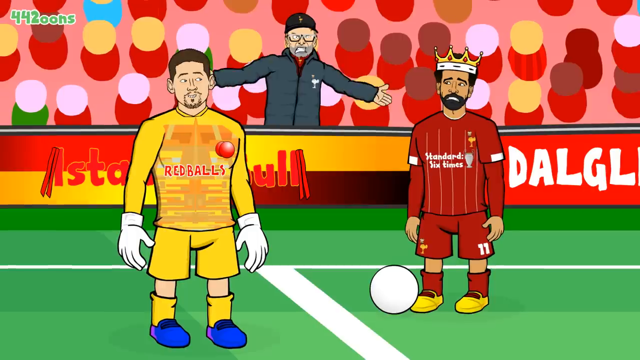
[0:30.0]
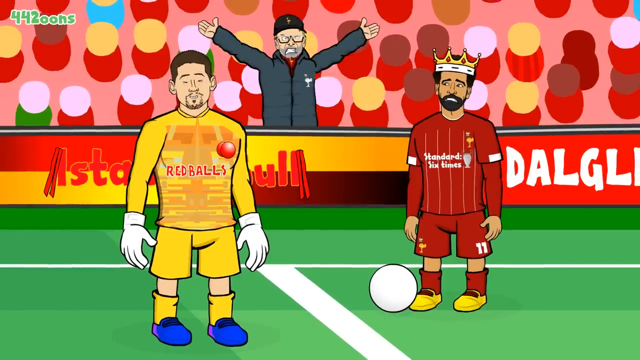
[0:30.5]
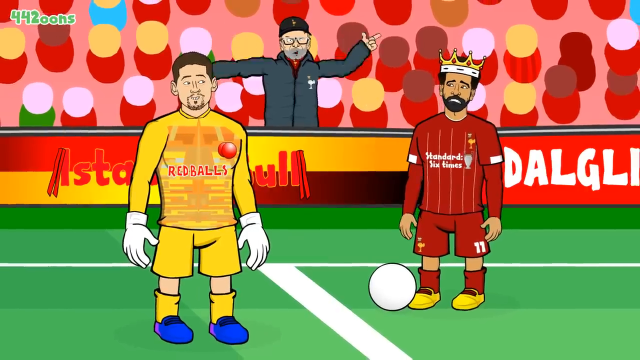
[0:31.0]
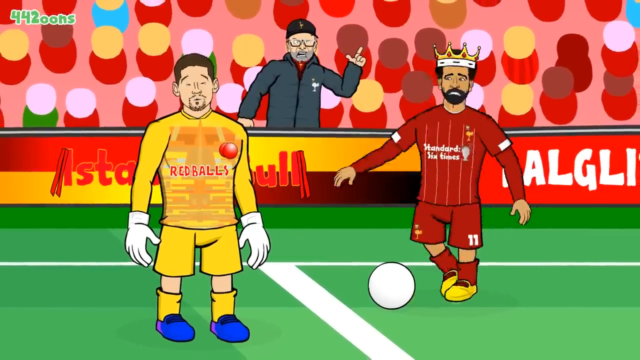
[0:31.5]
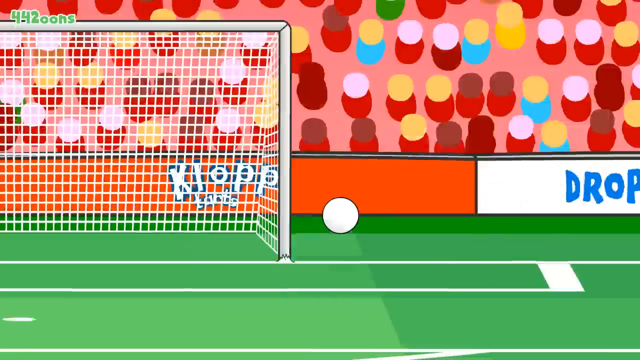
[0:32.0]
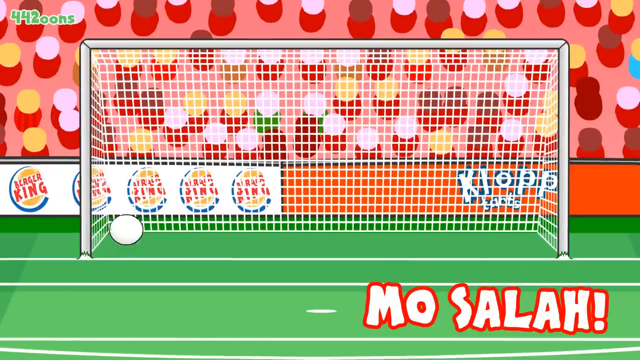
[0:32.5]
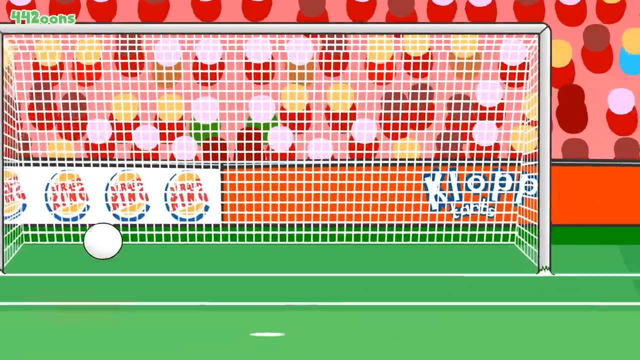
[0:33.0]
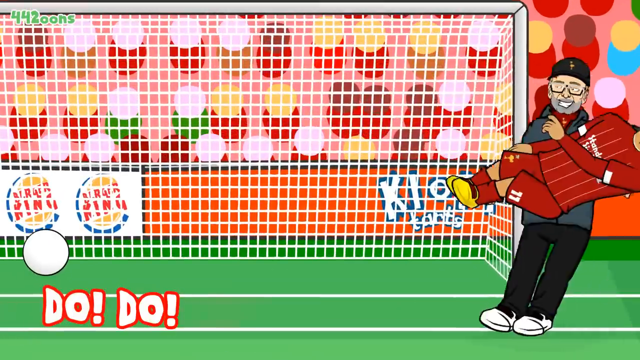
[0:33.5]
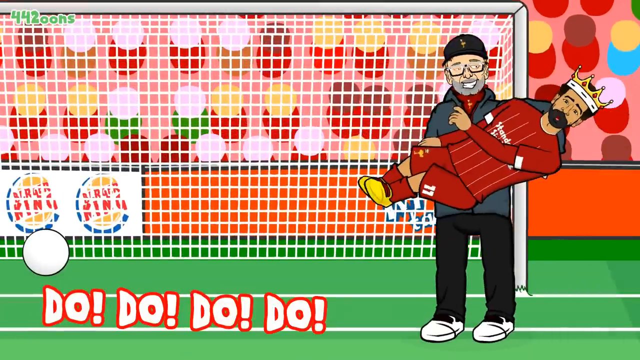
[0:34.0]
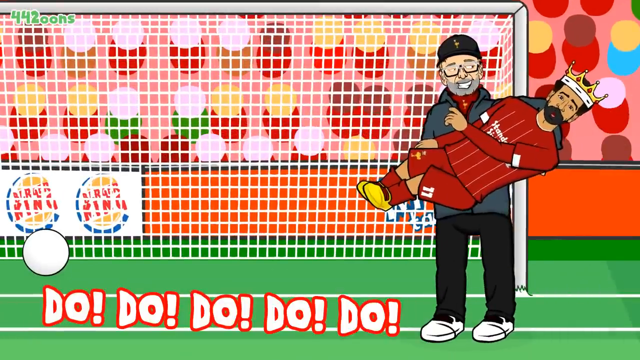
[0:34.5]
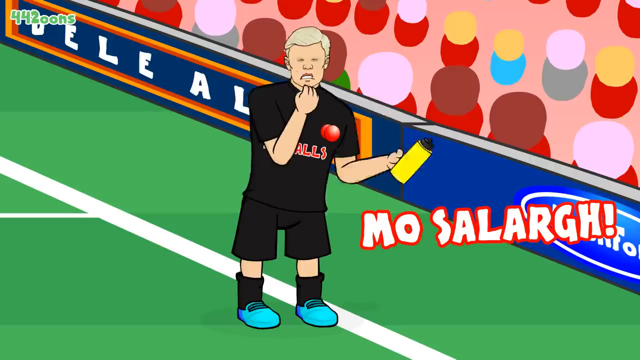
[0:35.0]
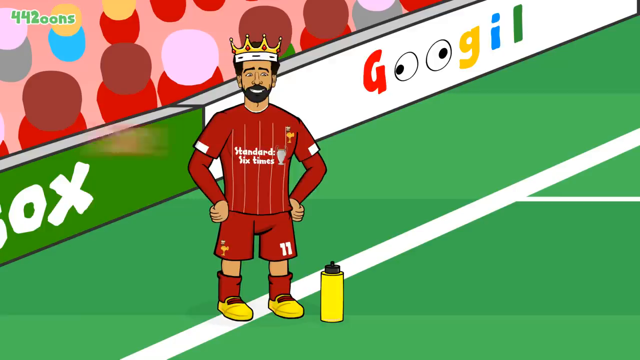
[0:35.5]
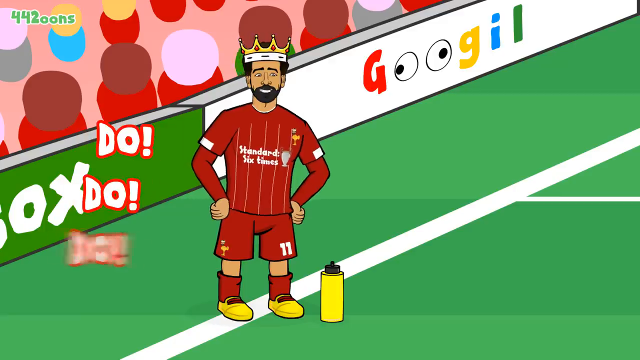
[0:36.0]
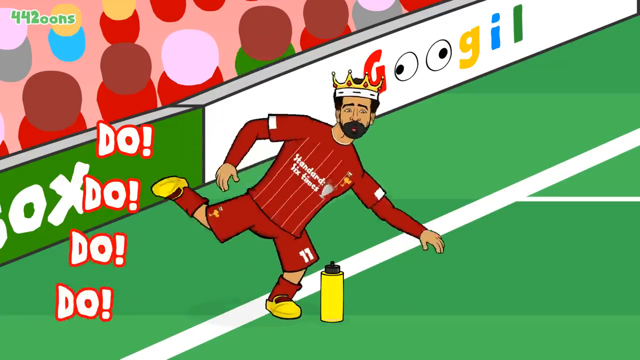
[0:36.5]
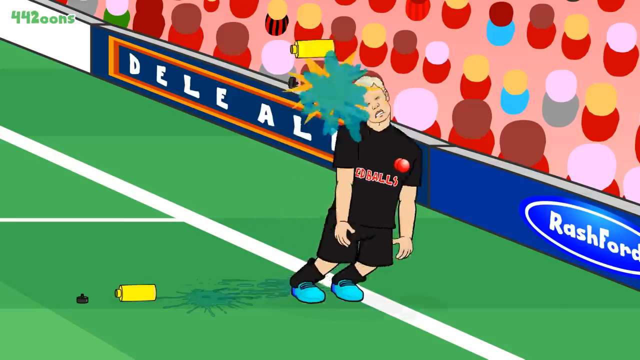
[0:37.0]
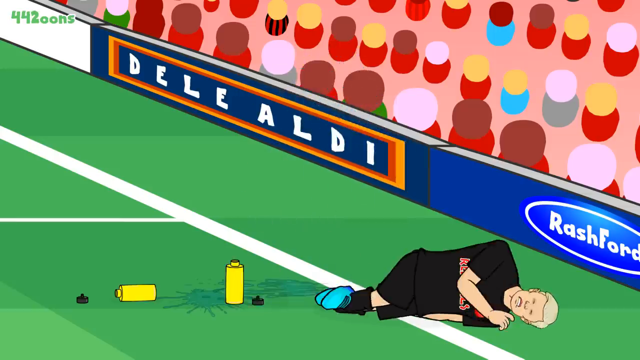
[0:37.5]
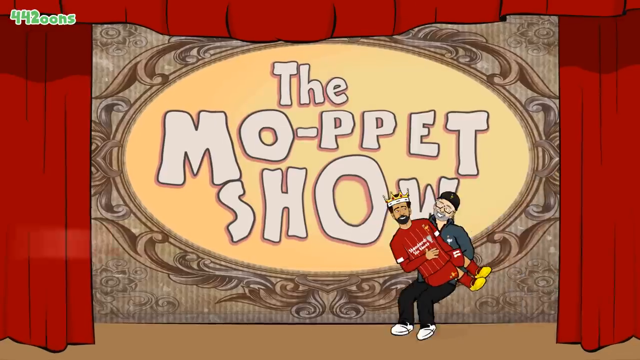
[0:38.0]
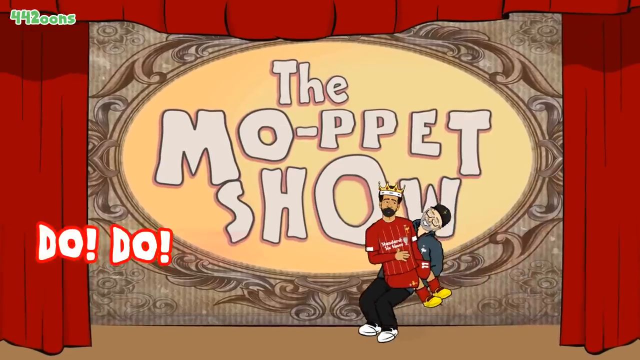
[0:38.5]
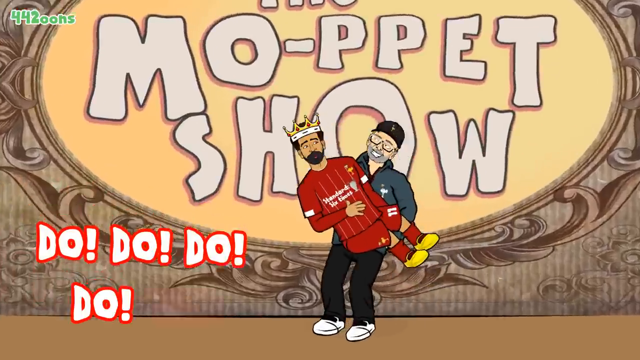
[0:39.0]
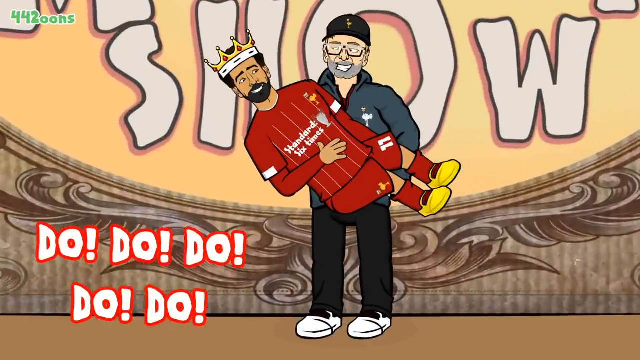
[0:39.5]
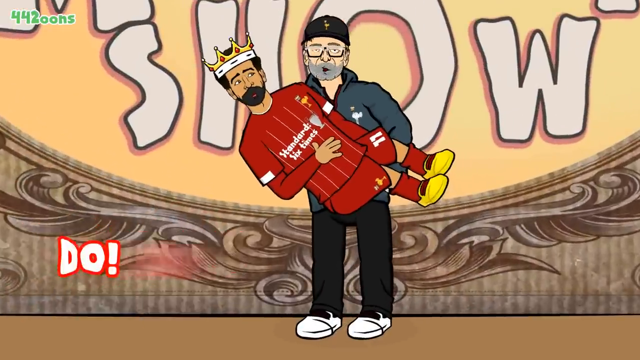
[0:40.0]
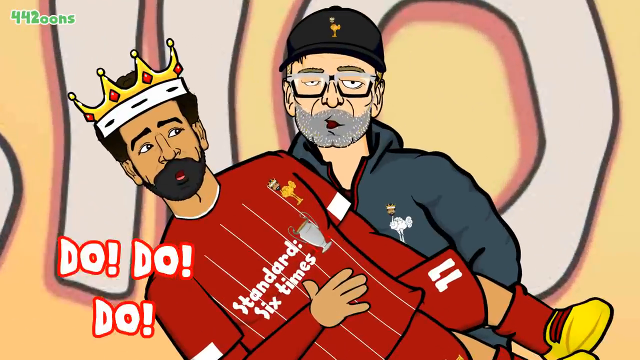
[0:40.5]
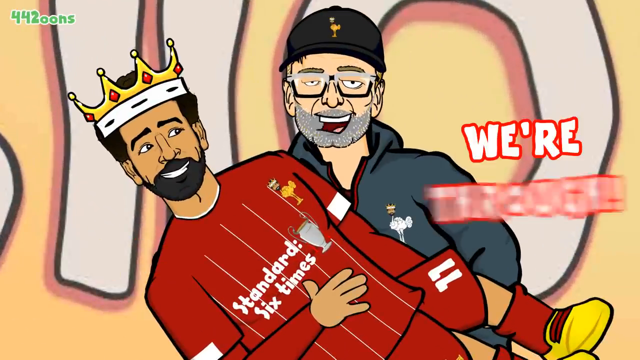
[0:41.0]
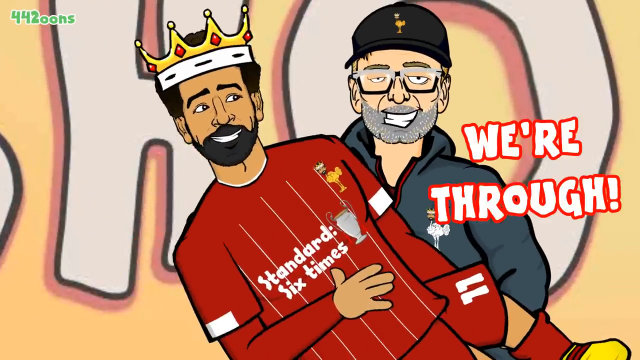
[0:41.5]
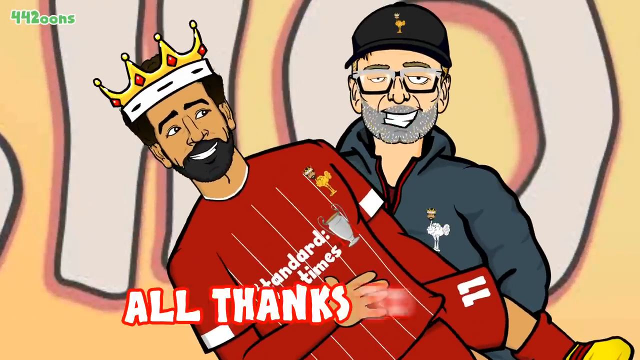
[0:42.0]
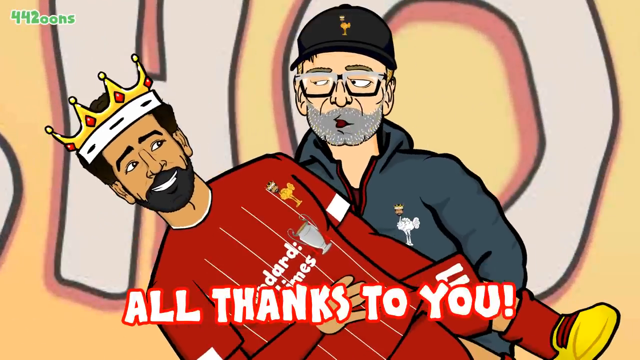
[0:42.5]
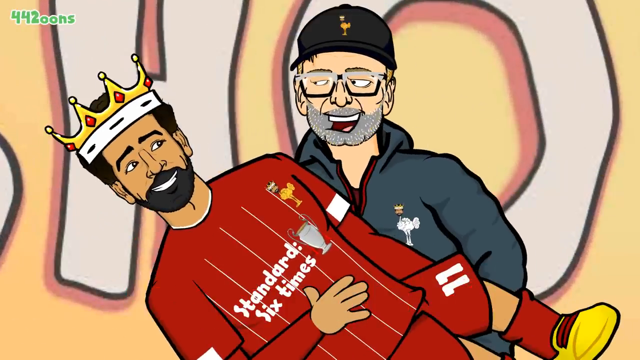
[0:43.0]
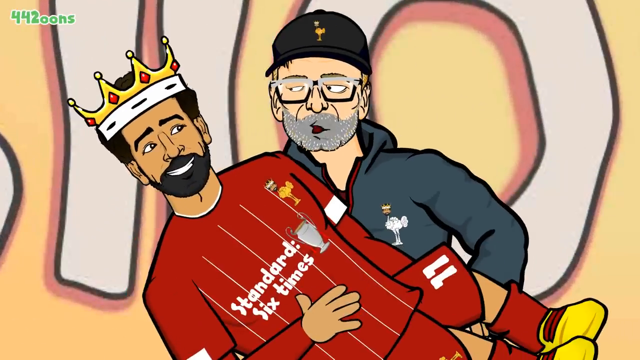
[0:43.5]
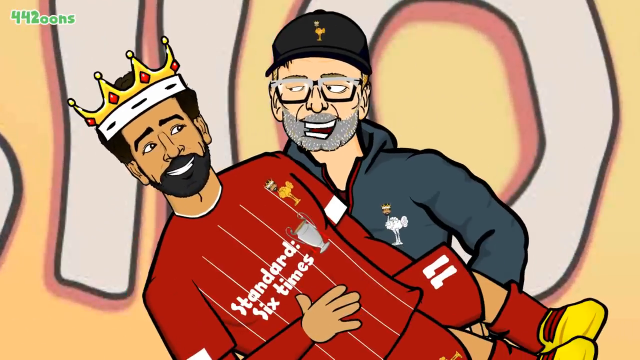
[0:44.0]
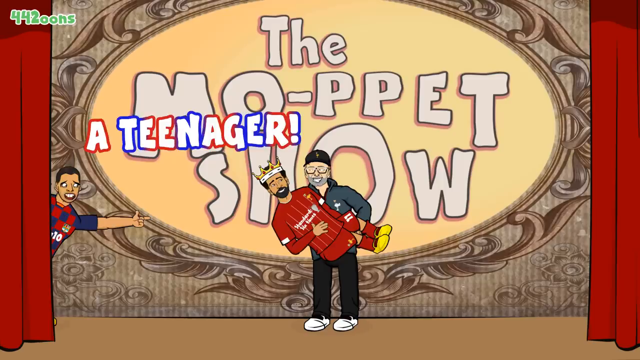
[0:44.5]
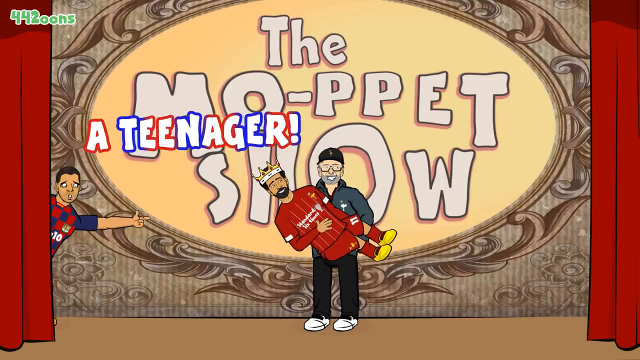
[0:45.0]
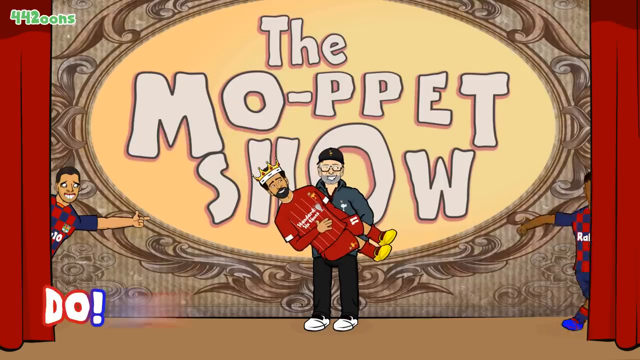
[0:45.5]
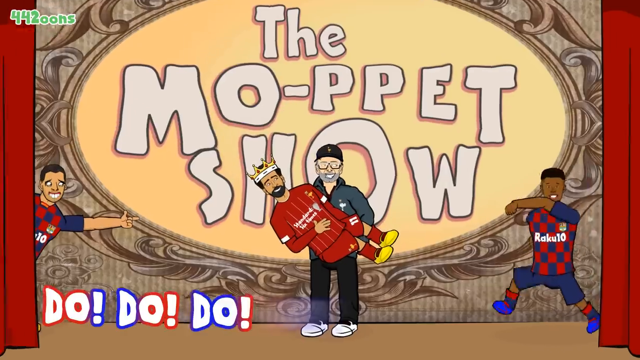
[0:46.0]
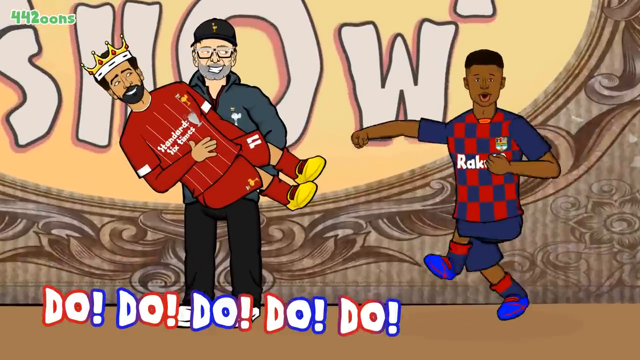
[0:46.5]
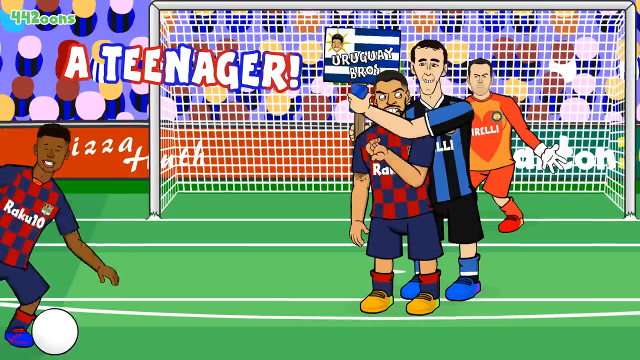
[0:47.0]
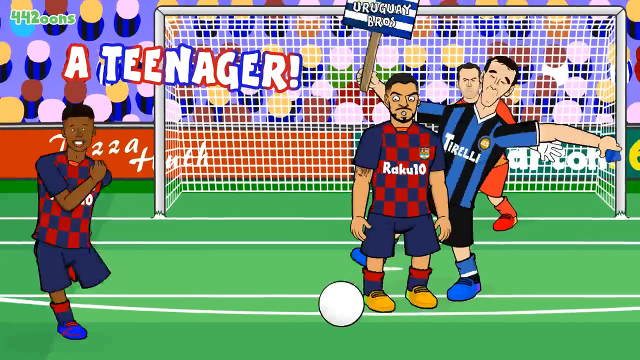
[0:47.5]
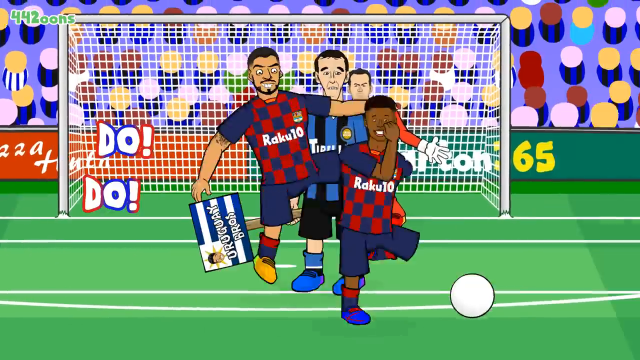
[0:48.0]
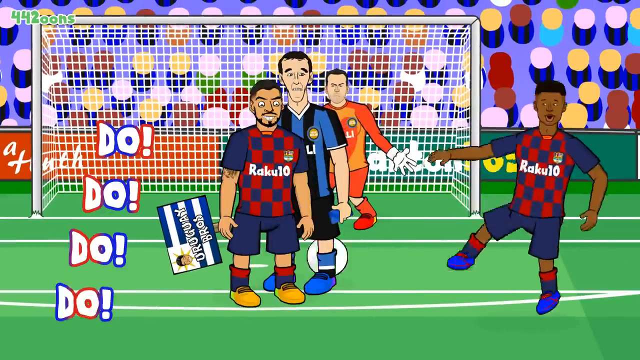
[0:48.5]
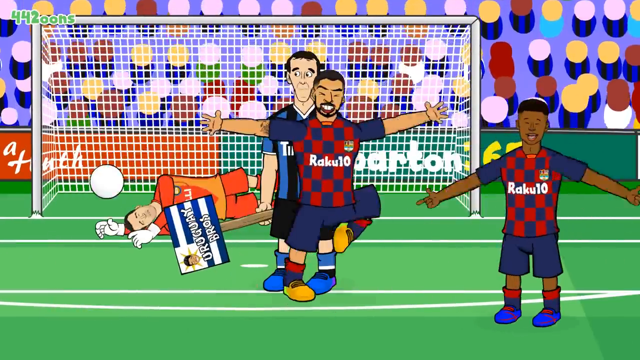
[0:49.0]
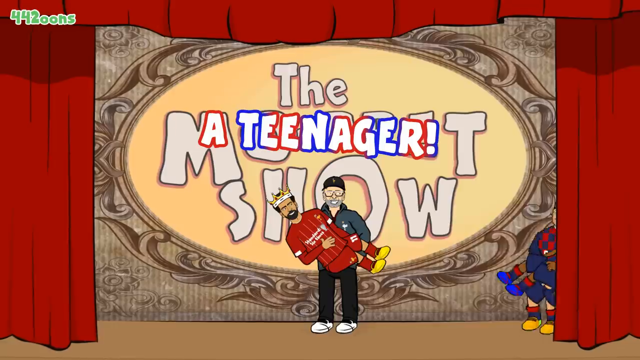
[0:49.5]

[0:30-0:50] A character in a red soccer uniform faces a man in a gray coat and black hat who looks very angry at him. Next to the character in red is another person in a gold soccer uniform with blue shoes. The character in red has just kicked a ball across the field. He then stands on a white line on another part of the field, laughing and kicking a yellow can. The can flies and hits another player on the head; that player, wearing a black soccer uniform, is knocked out. The video cuts to the show title screen, where the character in the red uniform is being held by the man in the gray coat.